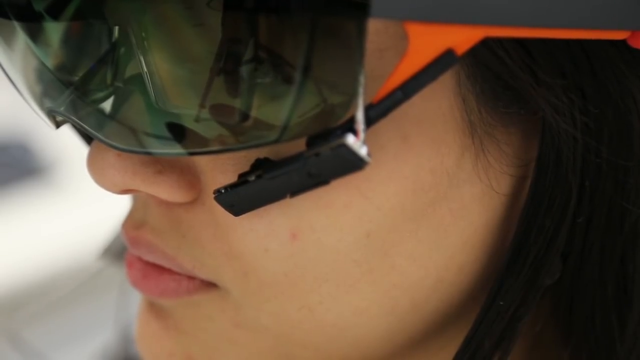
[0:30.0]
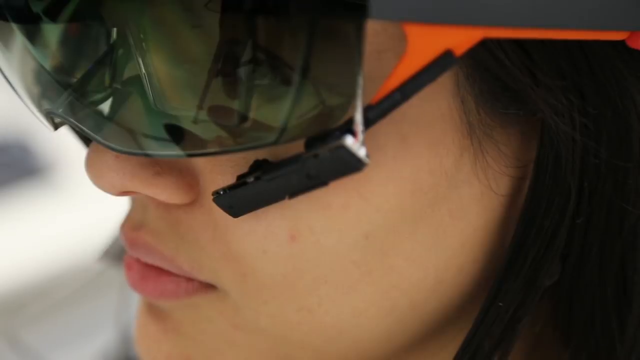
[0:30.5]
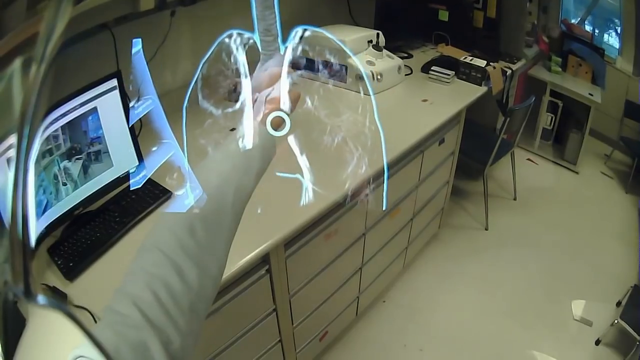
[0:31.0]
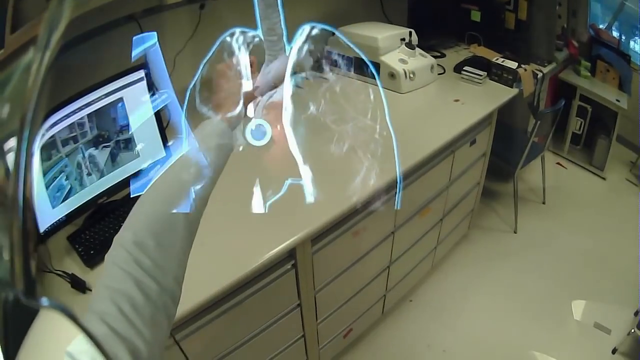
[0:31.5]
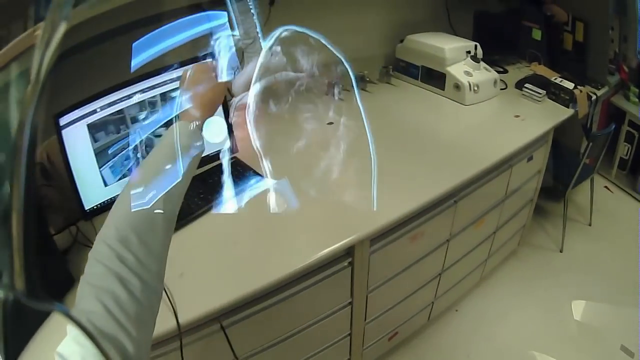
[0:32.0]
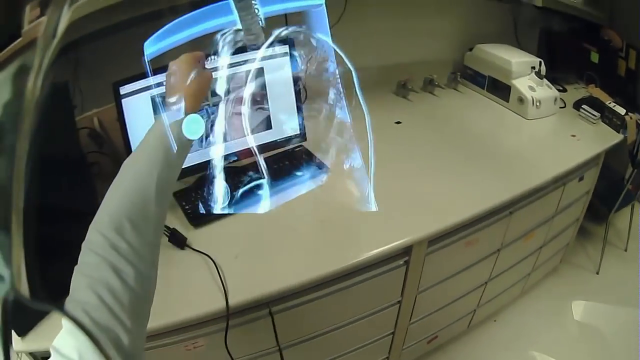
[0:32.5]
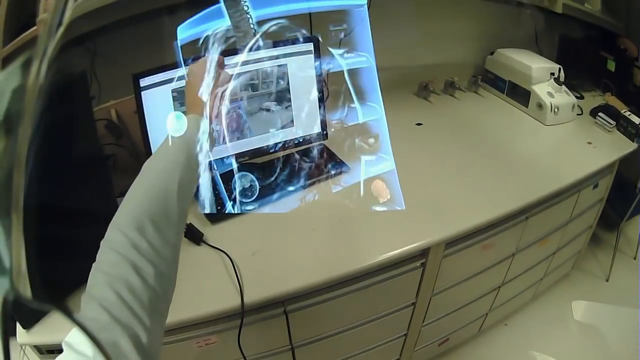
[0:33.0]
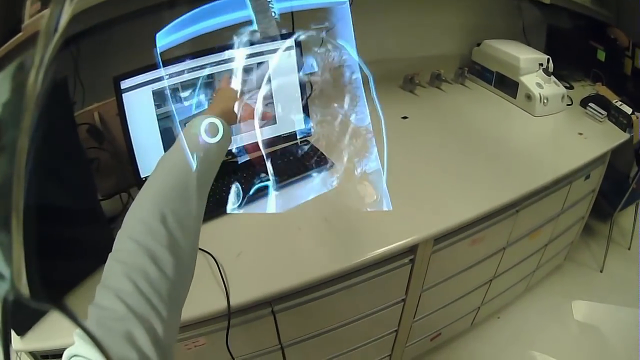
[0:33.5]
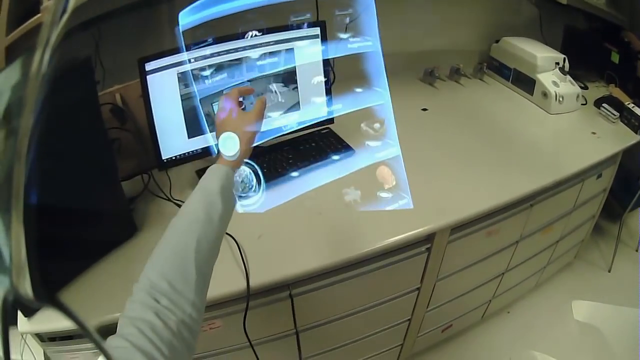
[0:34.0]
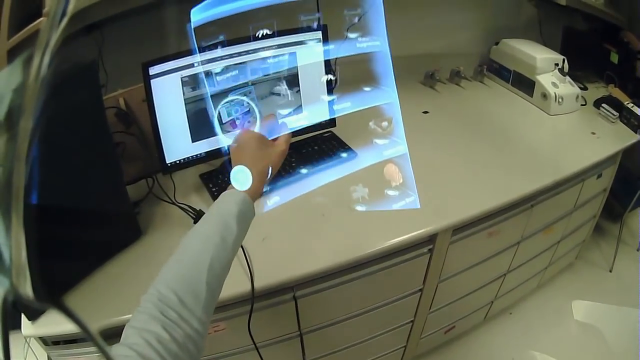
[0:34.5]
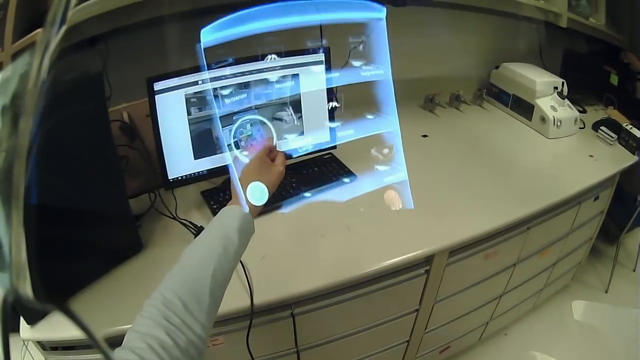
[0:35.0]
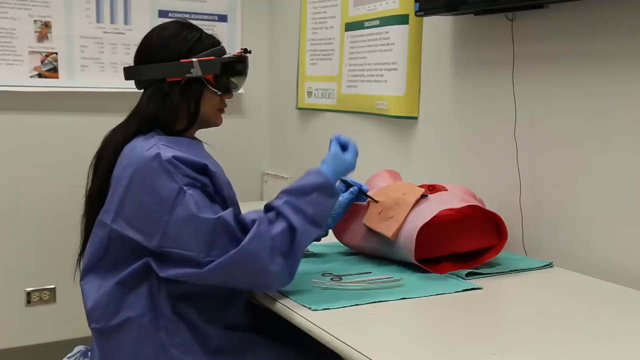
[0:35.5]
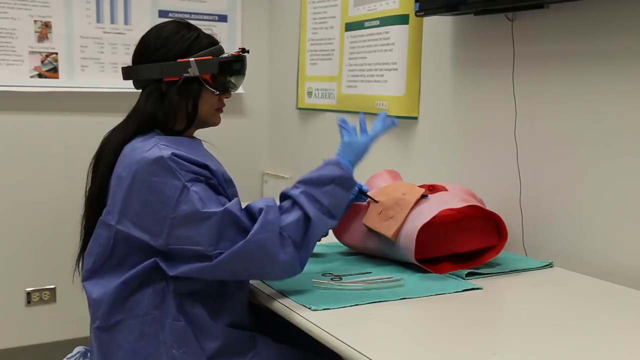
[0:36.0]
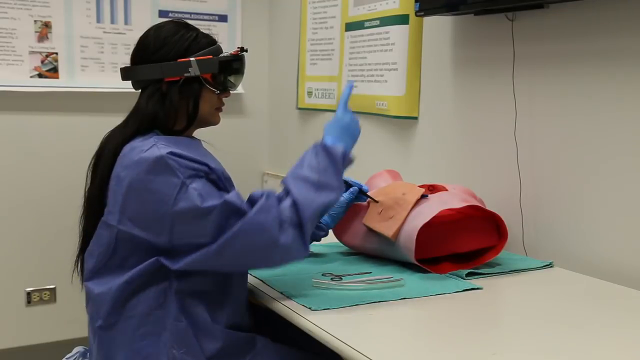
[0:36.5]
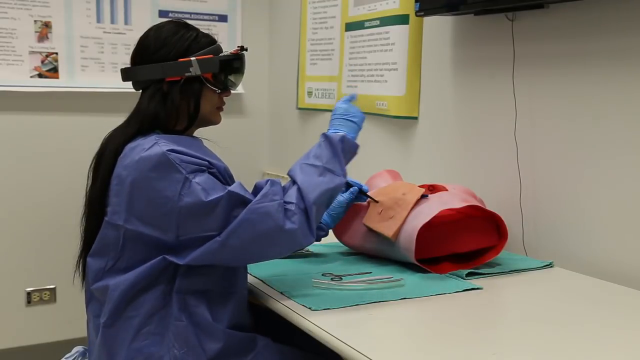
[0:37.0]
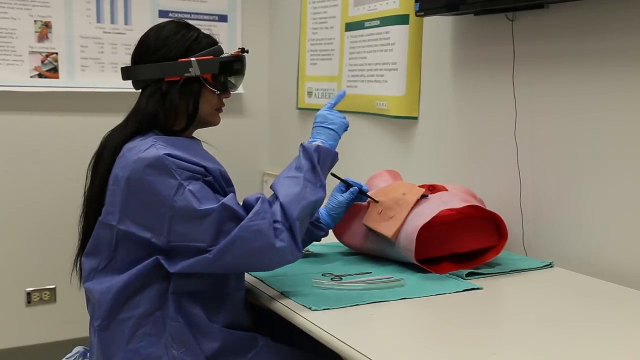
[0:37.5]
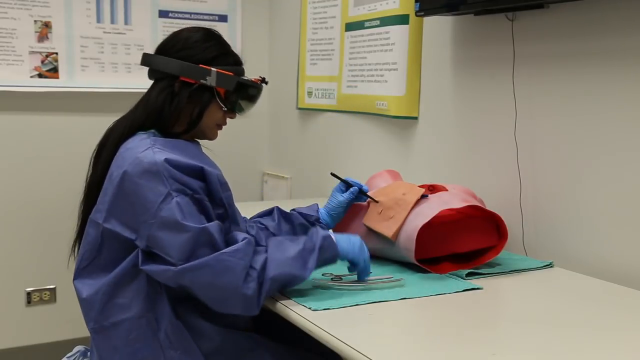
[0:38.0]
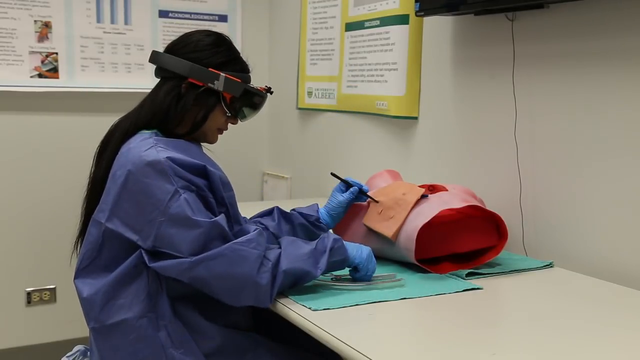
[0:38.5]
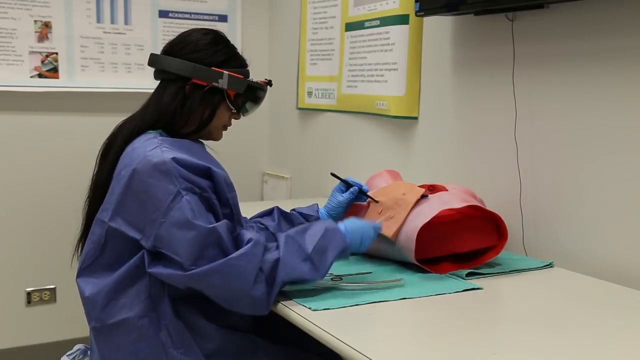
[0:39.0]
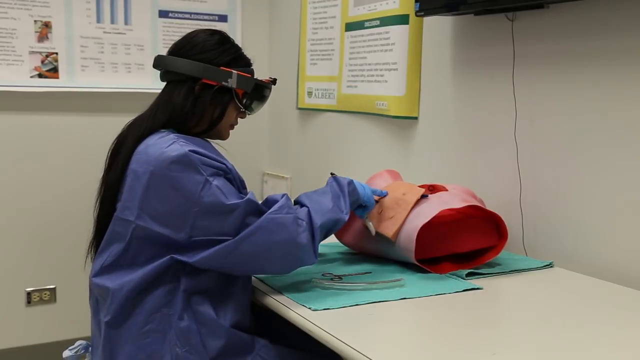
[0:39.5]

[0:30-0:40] A close-up shows the woman wearing simulation glasses; she has black hair. Next comes an image that appears to be the simulation she is seeing through the glasses, as if viewed through the glasses' lenses. She seems to be looking at a visual of a body part, possibly the lungs. Her left arm is outstretched away from her body, and her fingers touch the body part, moving the lungs around from a position facing the viewer to the side. She is then seen sitting at a lab table, still wearing the simulation glasses, along with a blue lab gown and blue nitrile gloves. The forefinger of her right hand points up in the air, while with her left hand she uses a piece of medical equipment on the torso area of a fake body lying on the table. She moves her right finger around in the air as if doing something she can see through the glasses that is not visible to the viewer. She then places her right hand back down on the table, fingertips lightly touching the table right on top of the medical equipment, picks up a piece of medical equipment and moves her hand back over to the fake upper torso of the synthetic cadaver on which she is performing the simulated surgery.